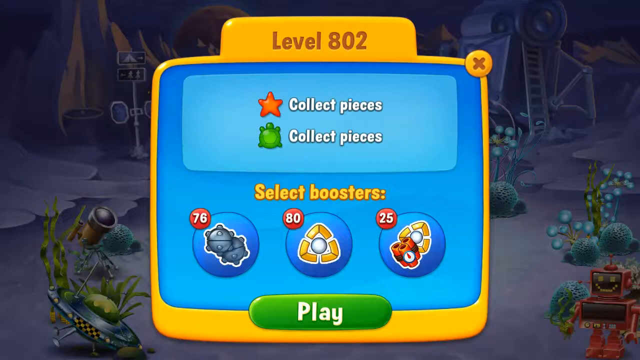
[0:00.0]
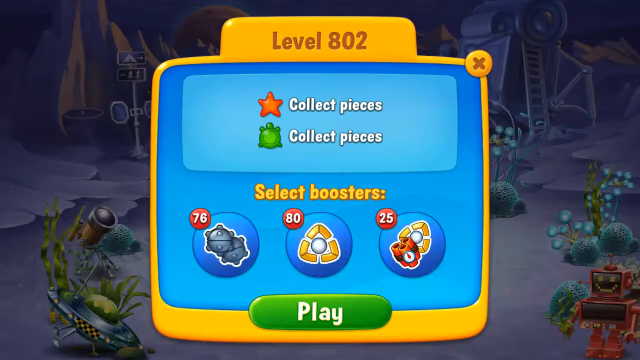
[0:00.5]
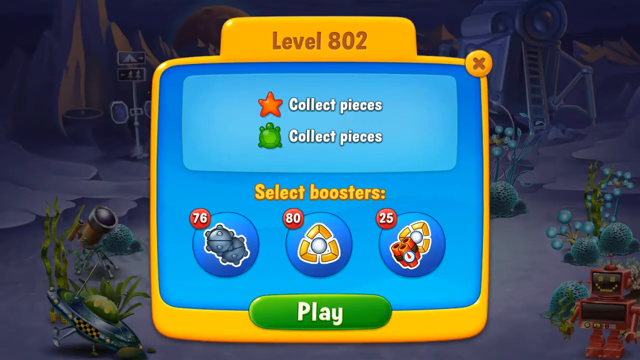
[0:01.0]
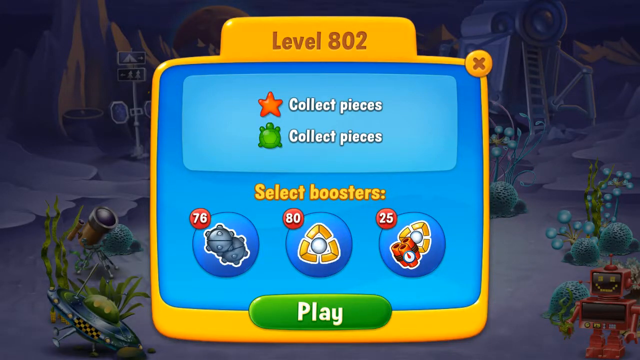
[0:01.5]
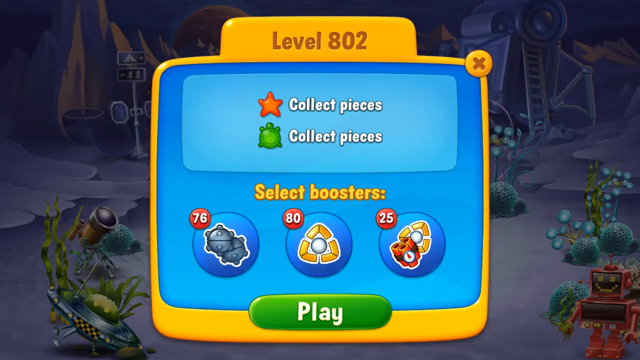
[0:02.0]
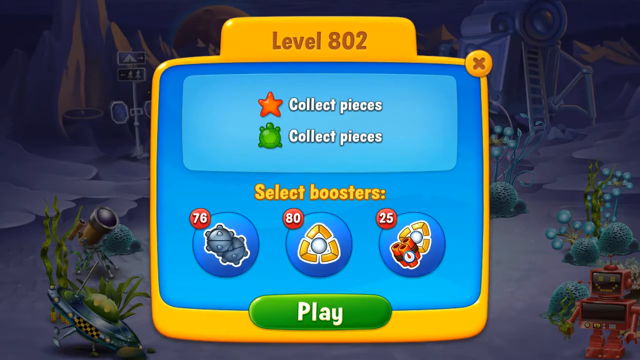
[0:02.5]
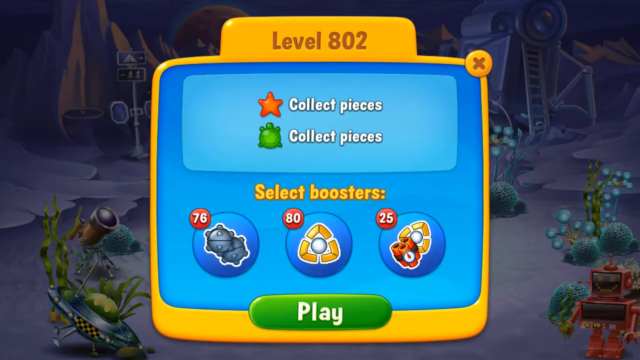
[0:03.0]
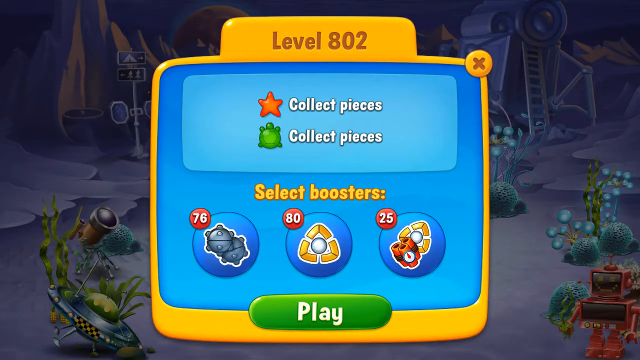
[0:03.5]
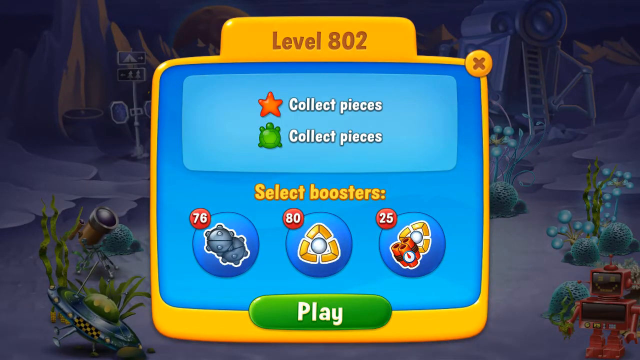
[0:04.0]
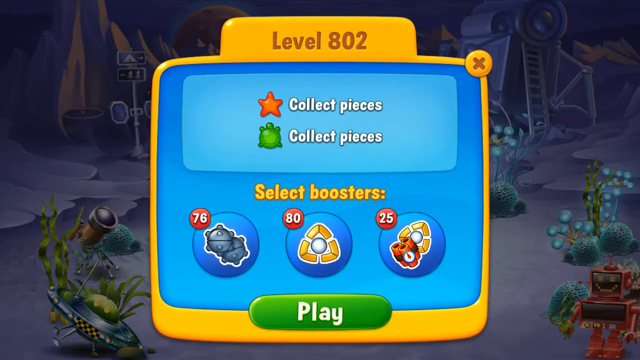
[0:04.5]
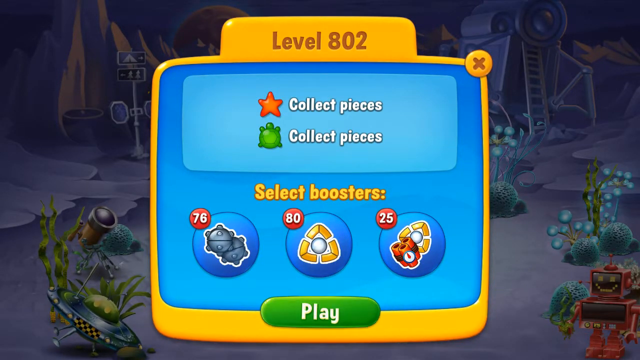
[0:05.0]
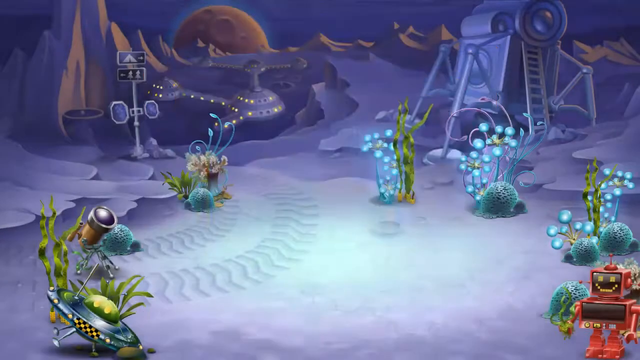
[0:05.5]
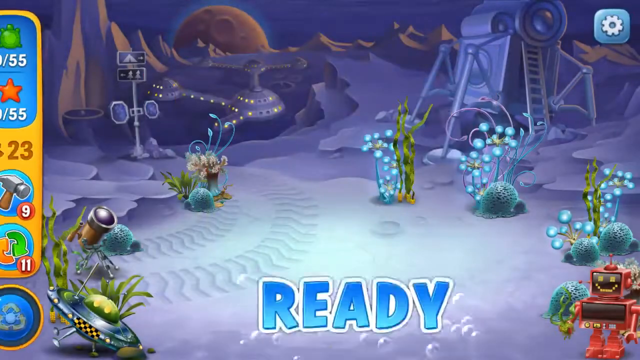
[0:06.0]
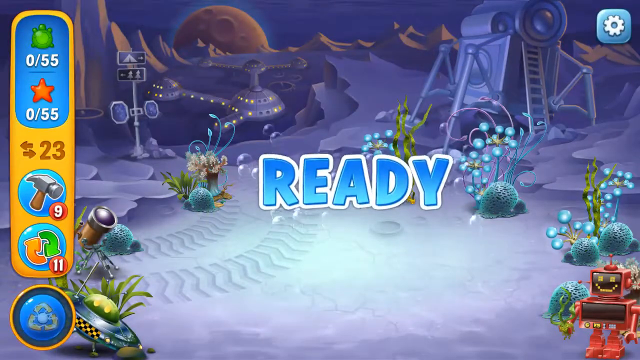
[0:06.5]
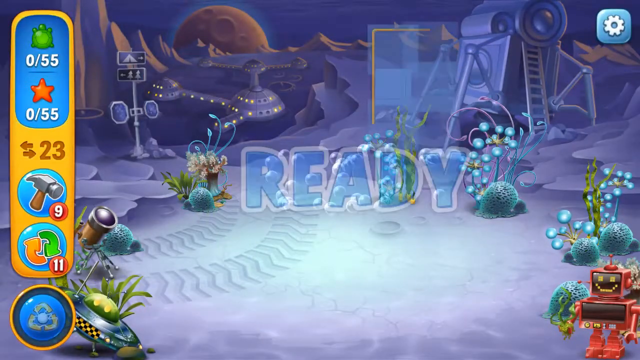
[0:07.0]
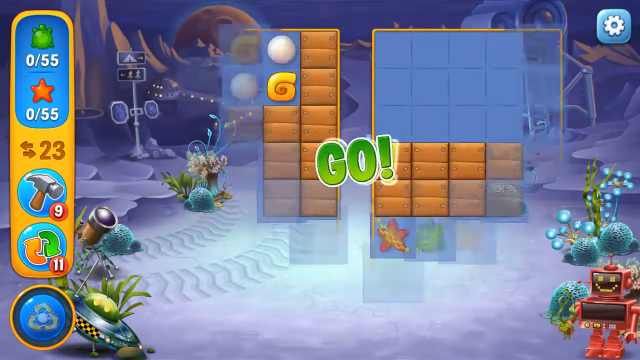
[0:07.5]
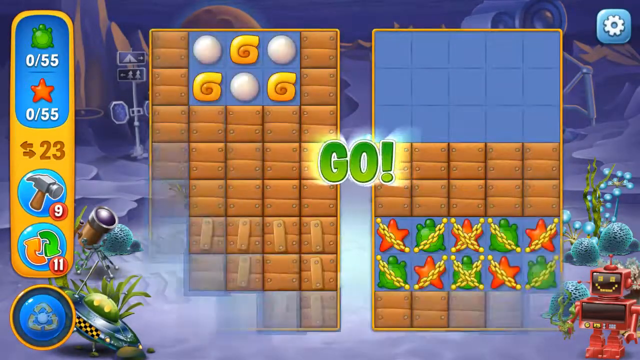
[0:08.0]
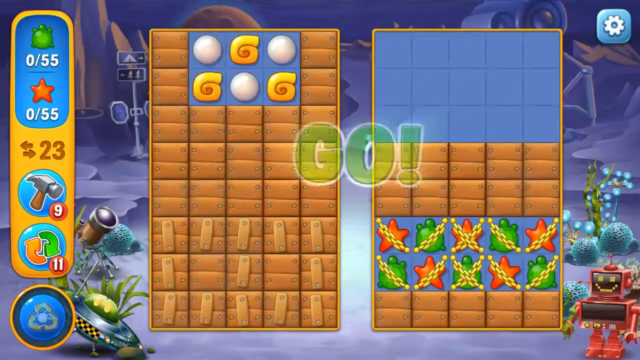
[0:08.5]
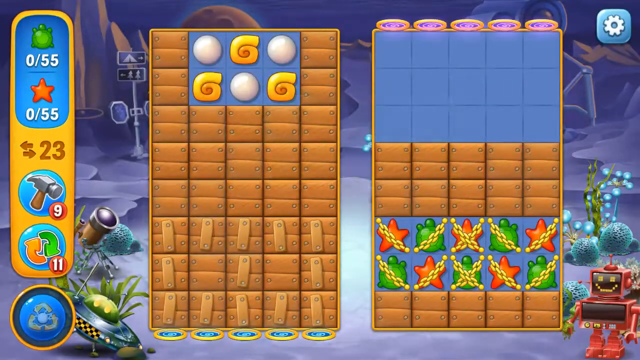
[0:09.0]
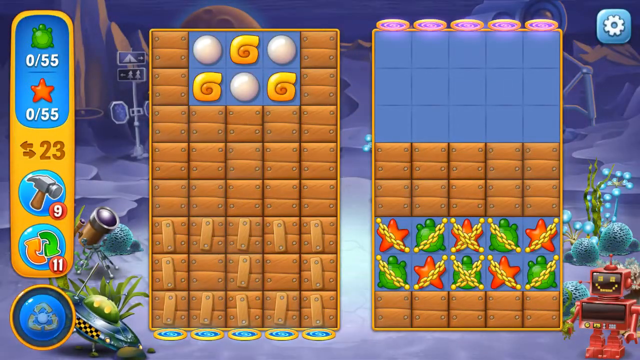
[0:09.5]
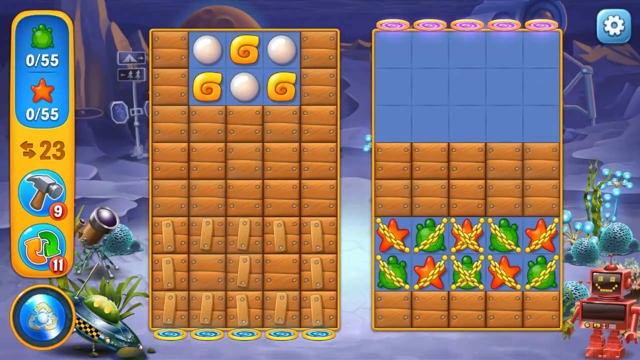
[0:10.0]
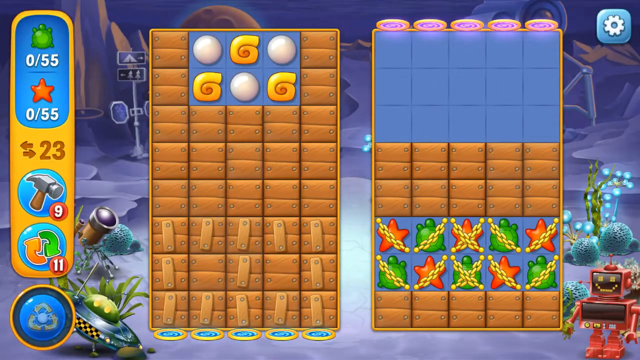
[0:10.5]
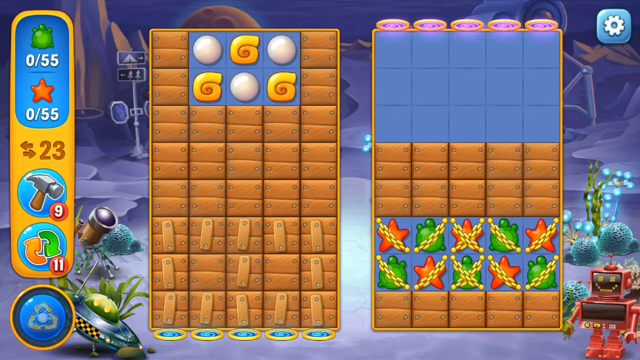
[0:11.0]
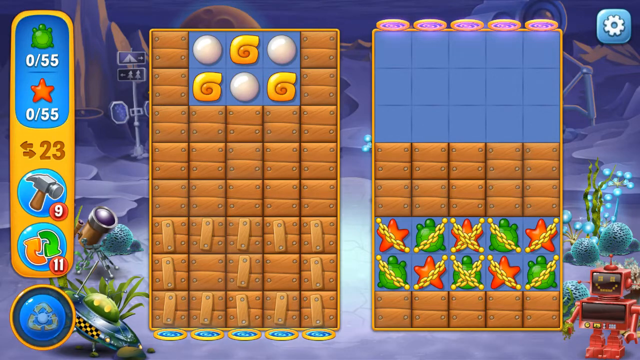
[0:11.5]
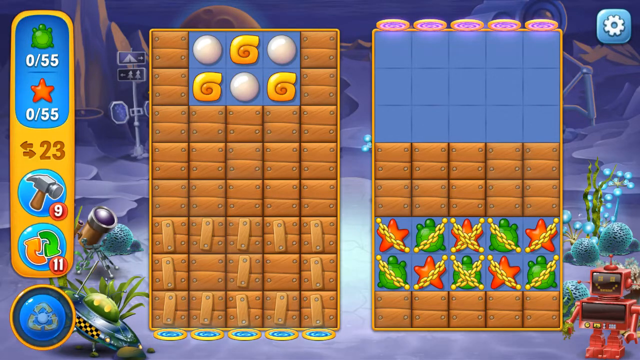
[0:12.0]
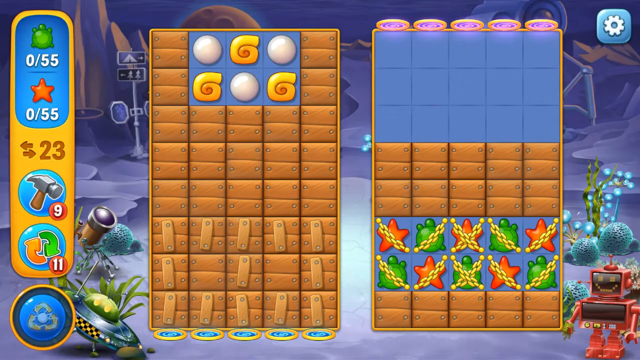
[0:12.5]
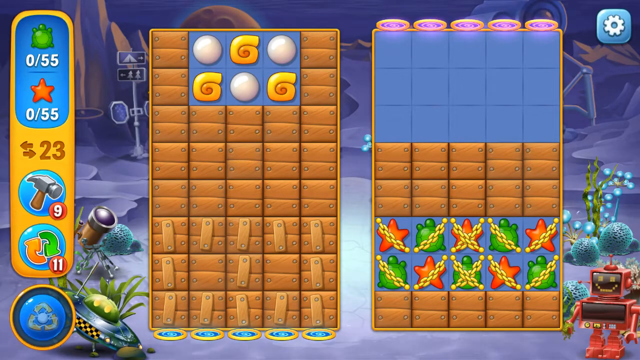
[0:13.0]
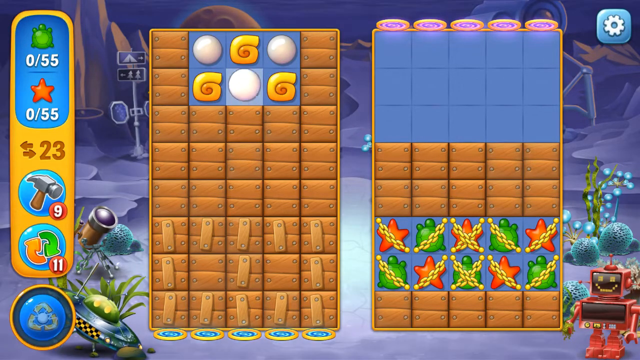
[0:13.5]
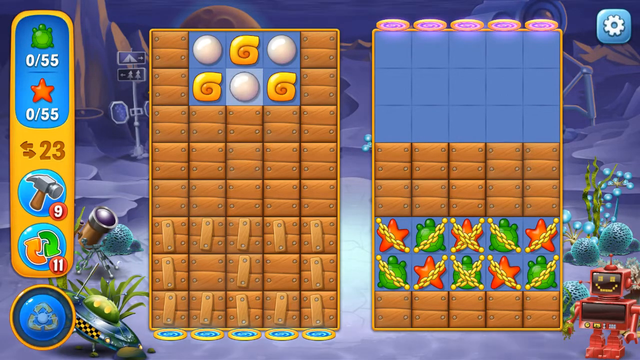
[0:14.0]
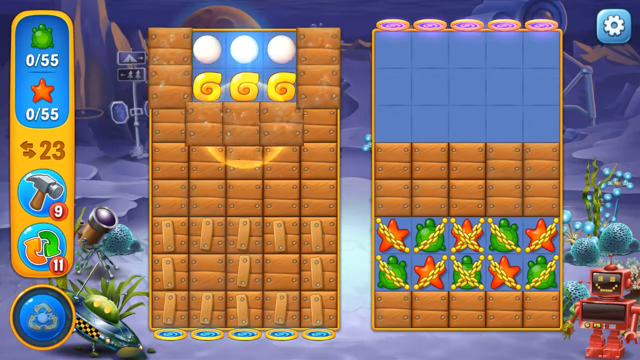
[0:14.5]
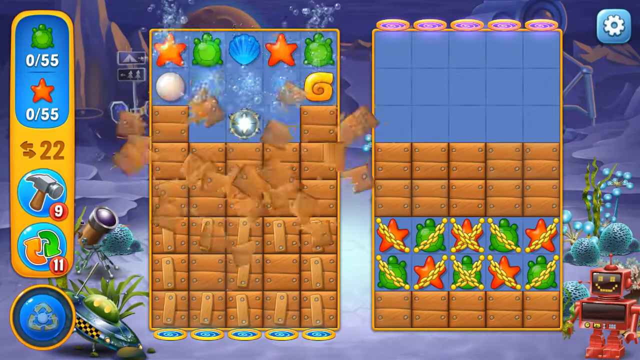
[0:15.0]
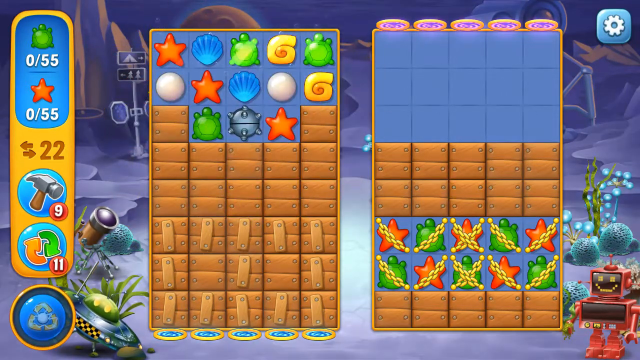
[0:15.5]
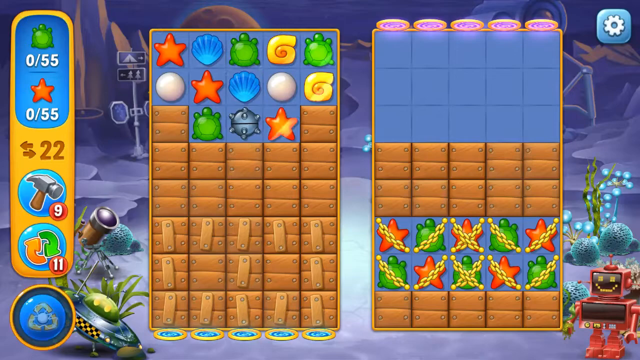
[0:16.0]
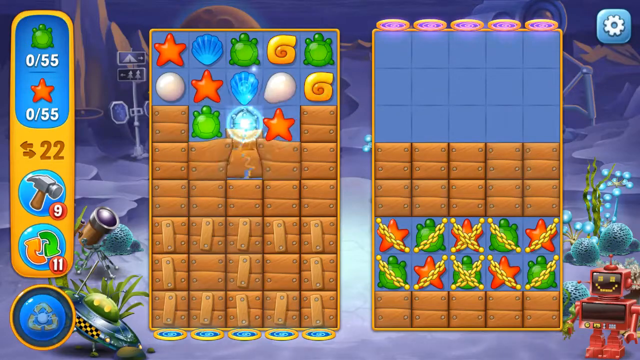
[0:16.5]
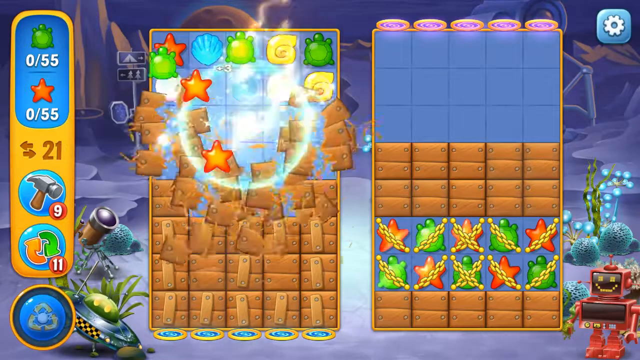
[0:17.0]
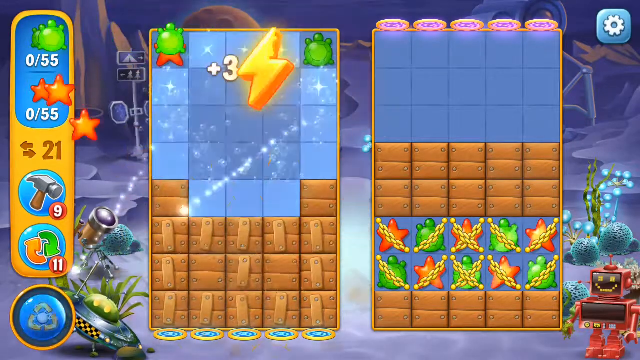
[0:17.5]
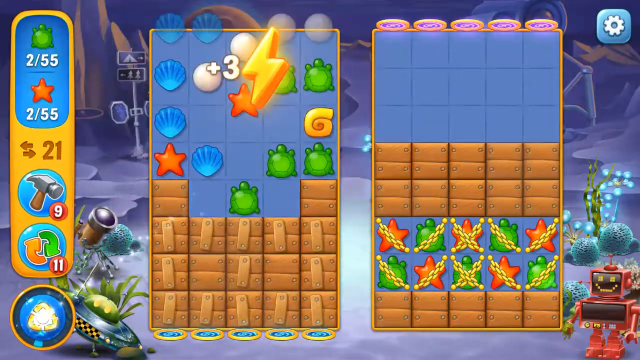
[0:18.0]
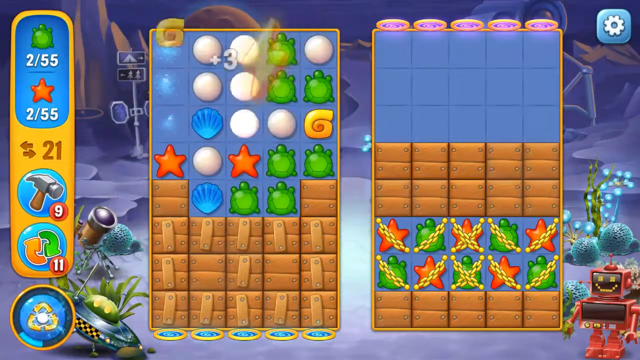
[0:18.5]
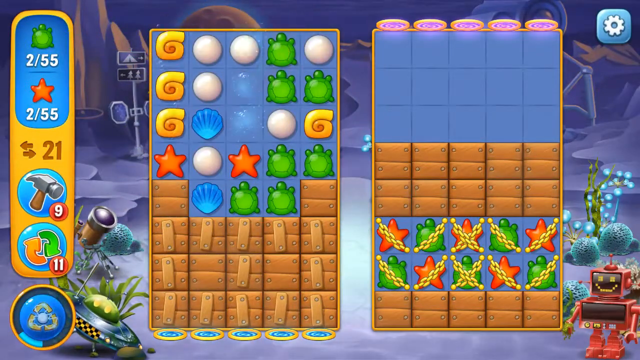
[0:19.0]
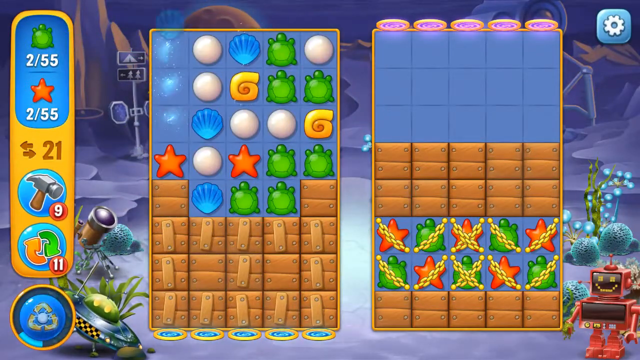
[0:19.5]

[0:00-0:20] A screen reads "level 802", with text saying "collect pieces of a starfish and a turtle" and further text saying "select boosters". There are 76 boosters of one object, 80 of another and 25 of a third, along with a button to select play. The screen stays up until the person selects play, and then text saying "ready" appears. On the left a scoreboard shows 0 out of 55 for the turtles and 0 out of 55 for the stars, along with 23 moves, 9 hammers and 11 shuffle options. The board has brown blocks, and the turtles and starfish on it have chains on them. The person swaps pieces on the board so they can break some of the boxes, and makes matches.